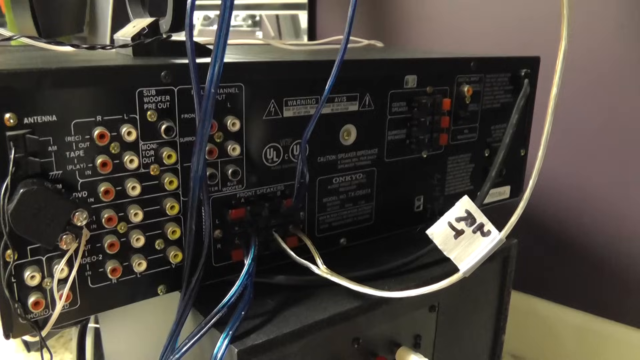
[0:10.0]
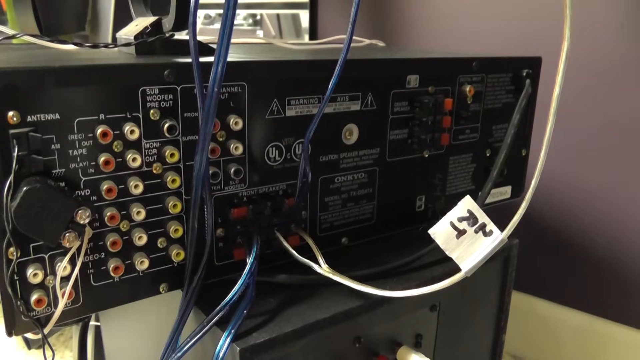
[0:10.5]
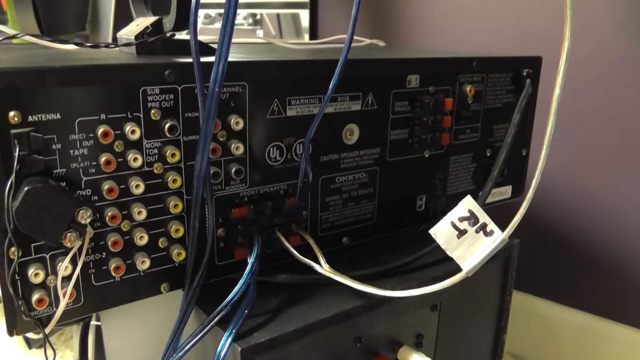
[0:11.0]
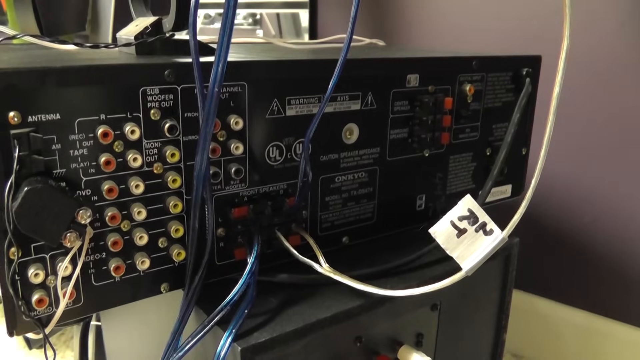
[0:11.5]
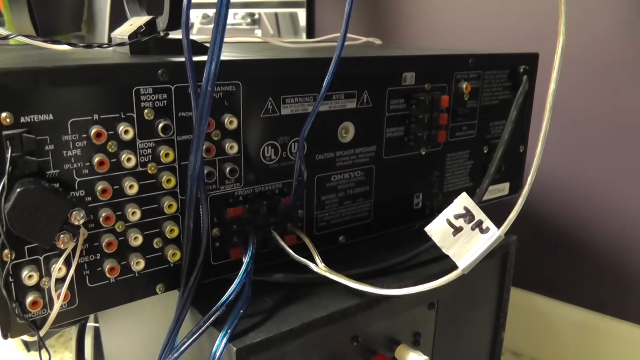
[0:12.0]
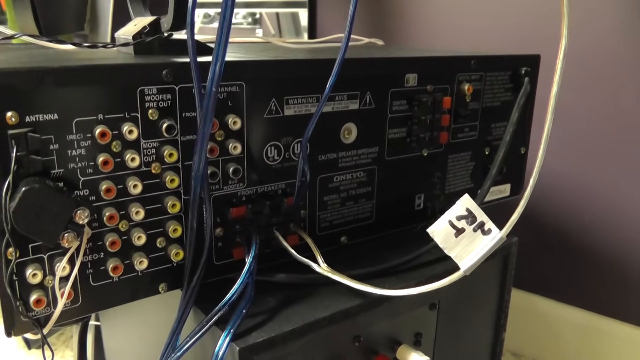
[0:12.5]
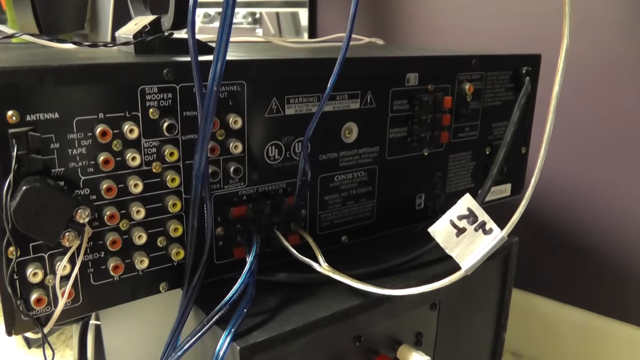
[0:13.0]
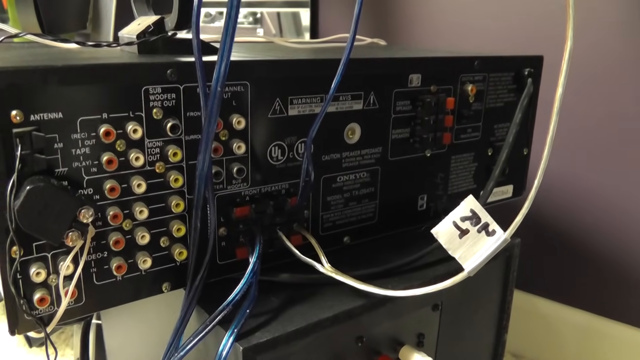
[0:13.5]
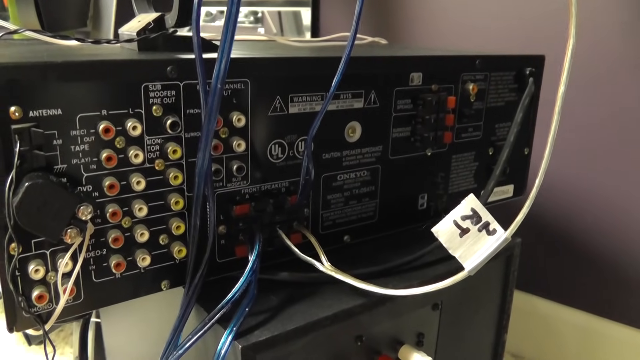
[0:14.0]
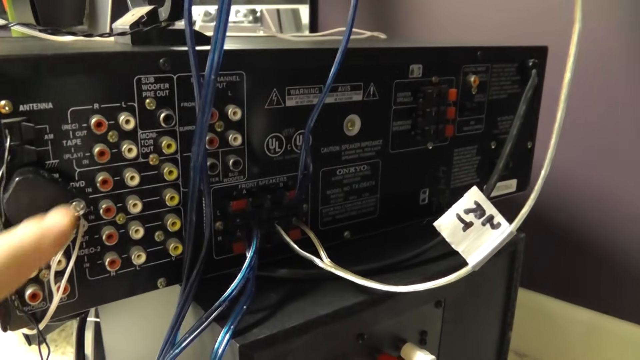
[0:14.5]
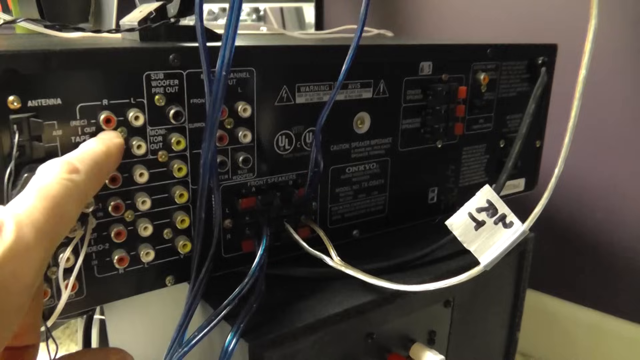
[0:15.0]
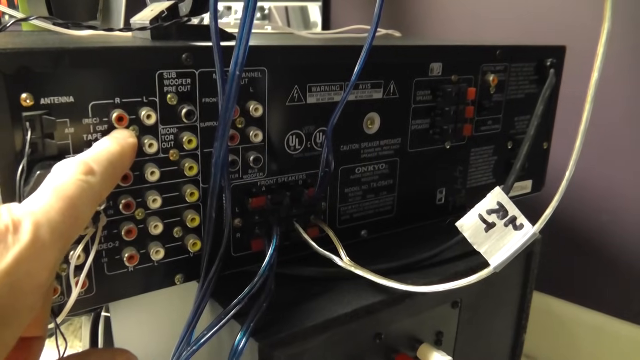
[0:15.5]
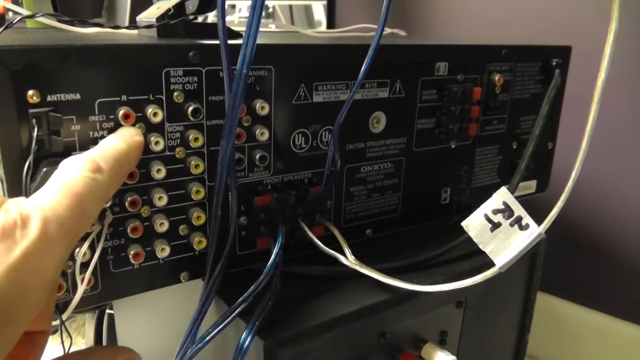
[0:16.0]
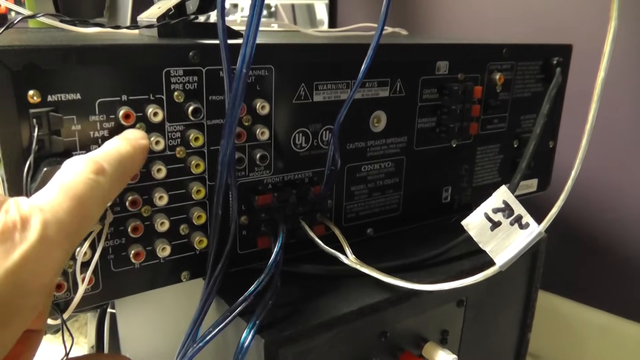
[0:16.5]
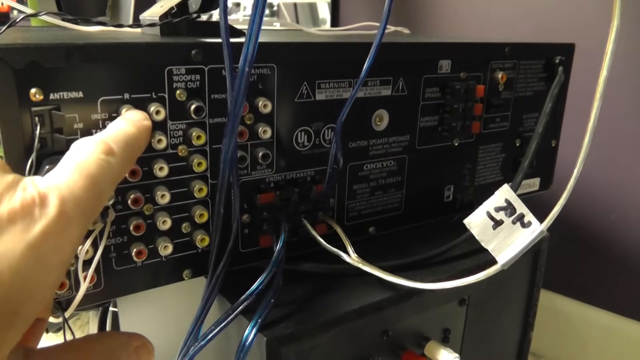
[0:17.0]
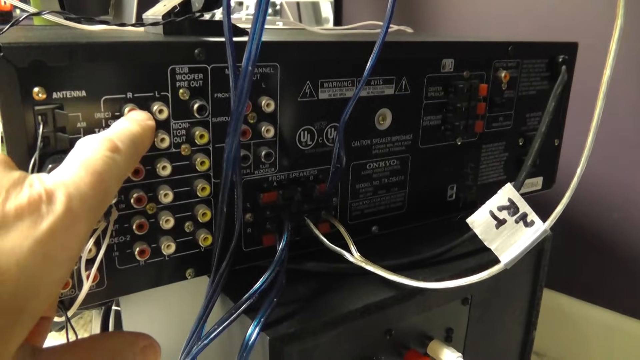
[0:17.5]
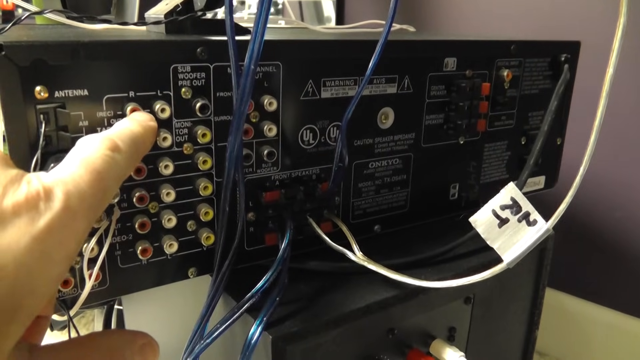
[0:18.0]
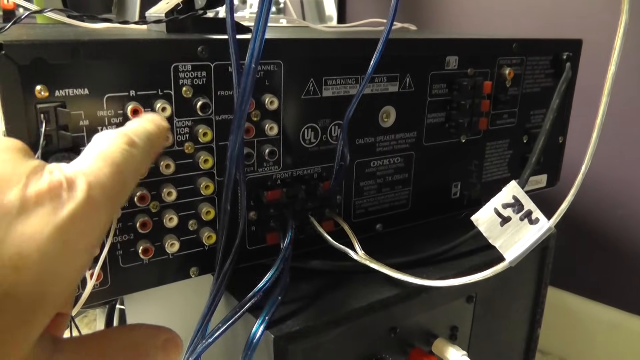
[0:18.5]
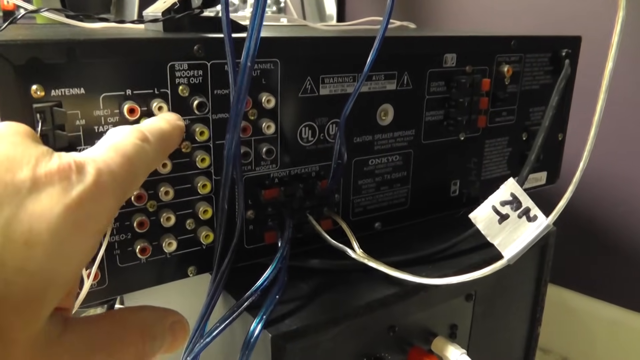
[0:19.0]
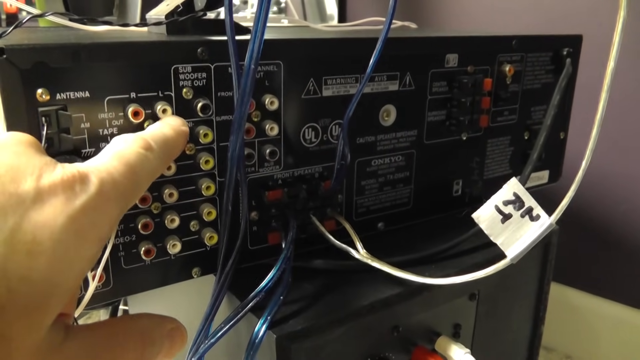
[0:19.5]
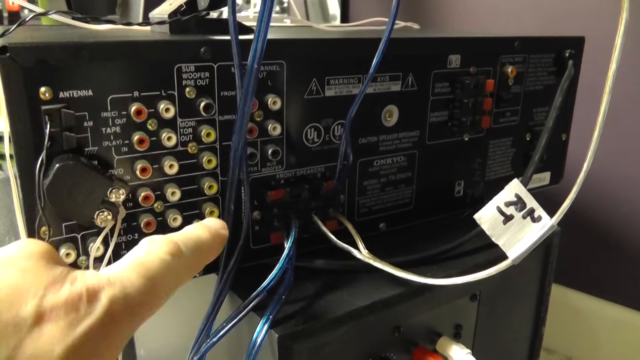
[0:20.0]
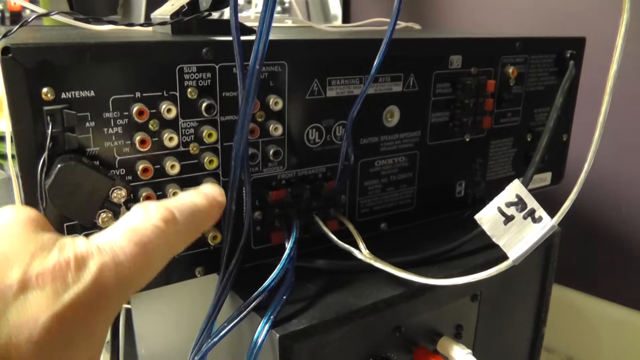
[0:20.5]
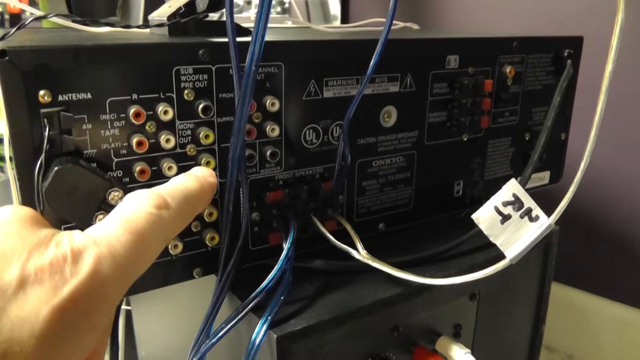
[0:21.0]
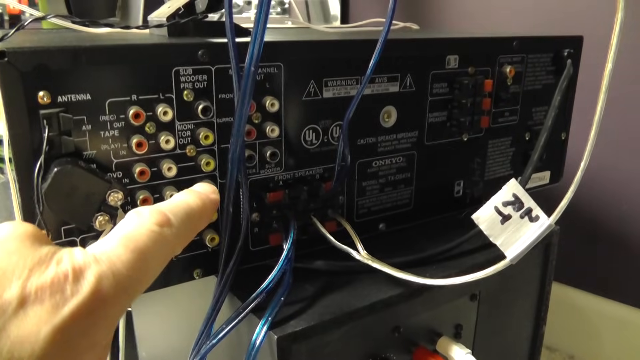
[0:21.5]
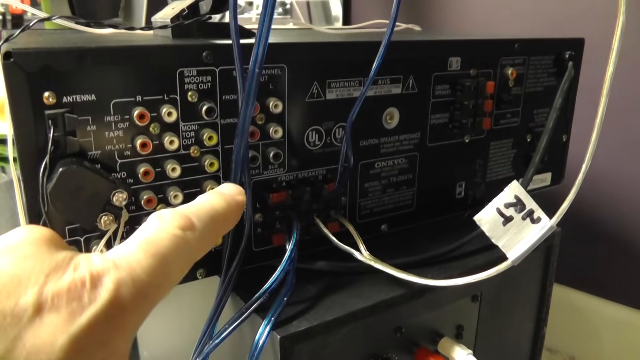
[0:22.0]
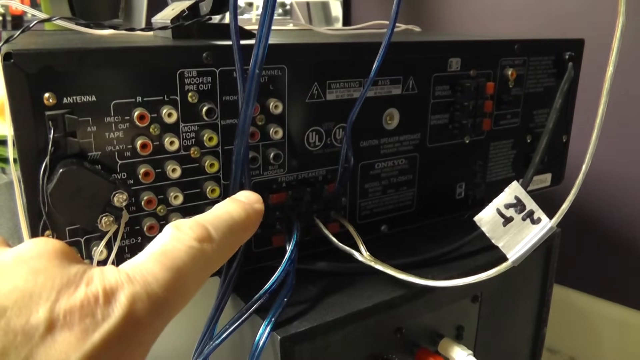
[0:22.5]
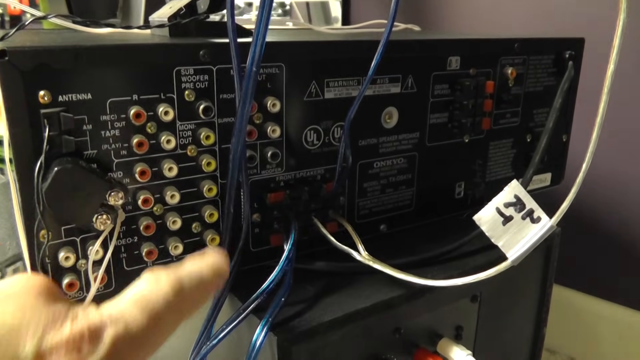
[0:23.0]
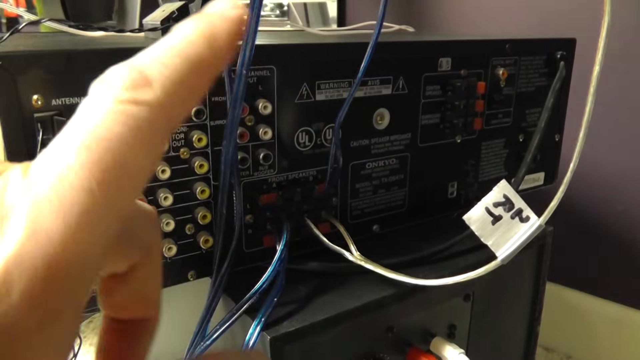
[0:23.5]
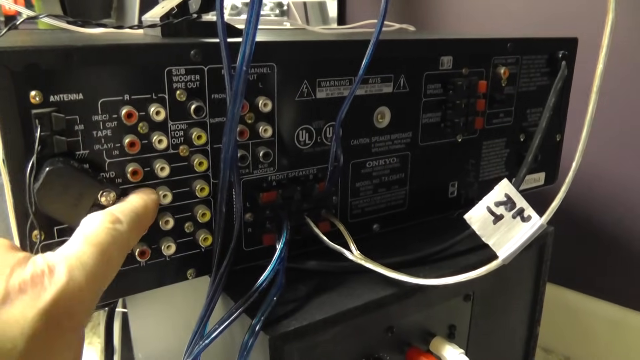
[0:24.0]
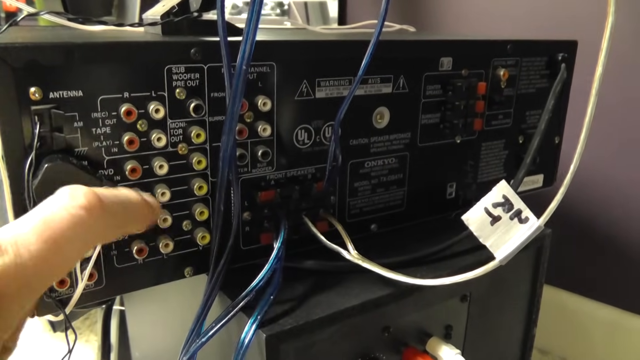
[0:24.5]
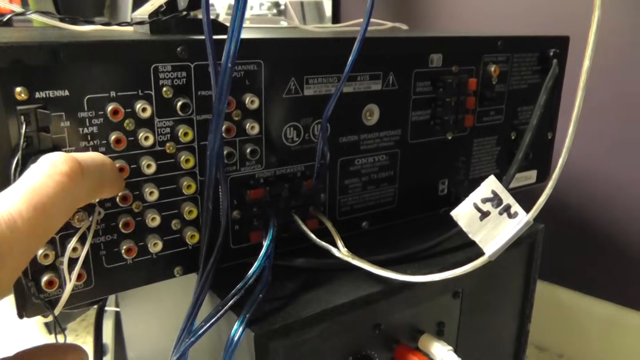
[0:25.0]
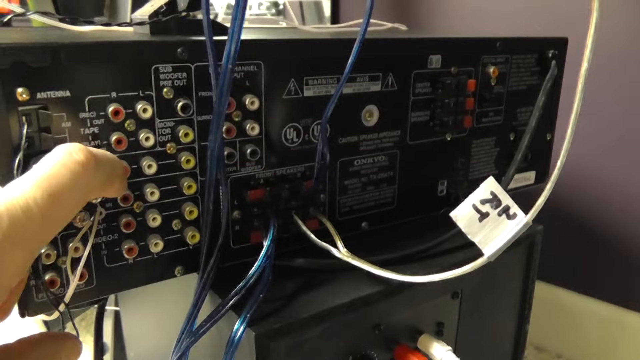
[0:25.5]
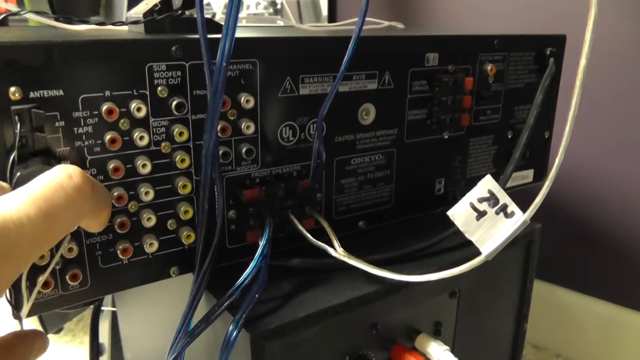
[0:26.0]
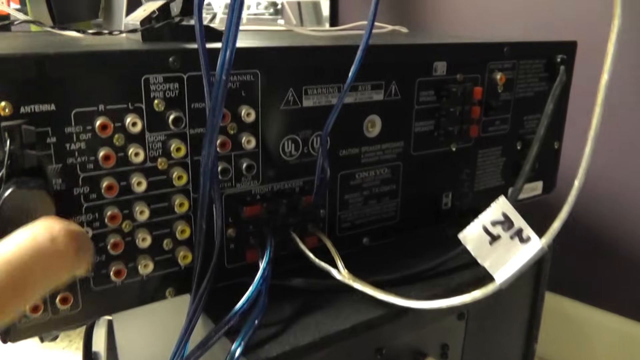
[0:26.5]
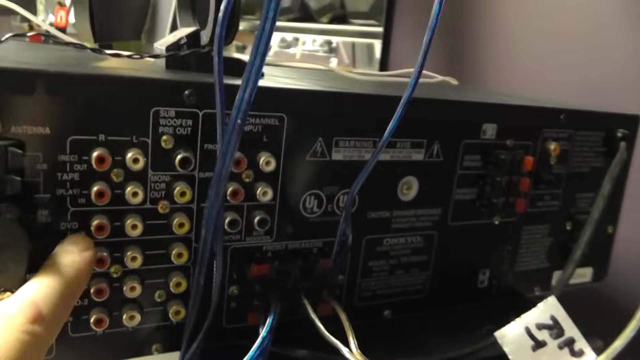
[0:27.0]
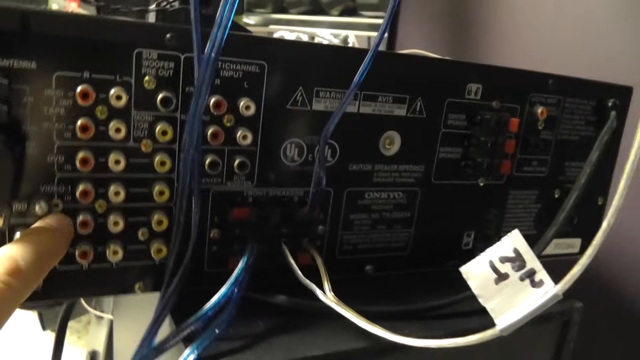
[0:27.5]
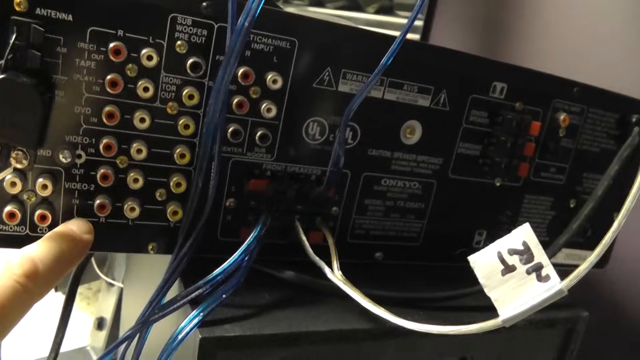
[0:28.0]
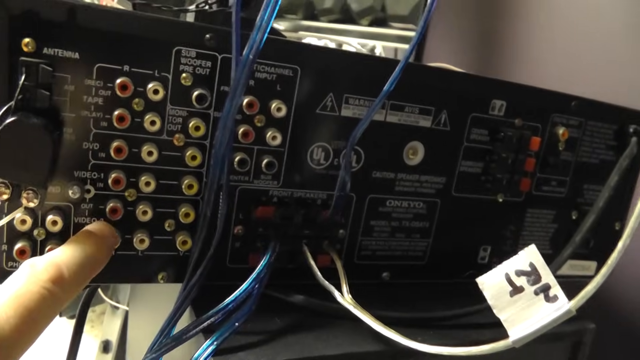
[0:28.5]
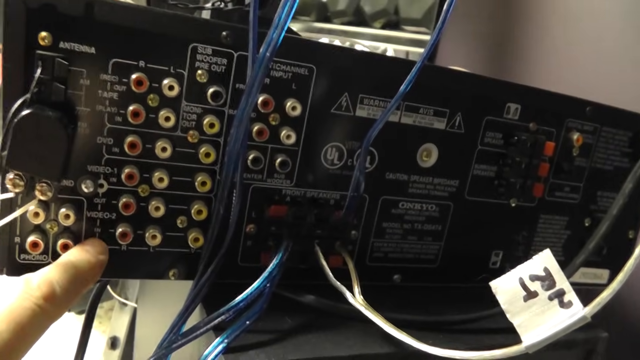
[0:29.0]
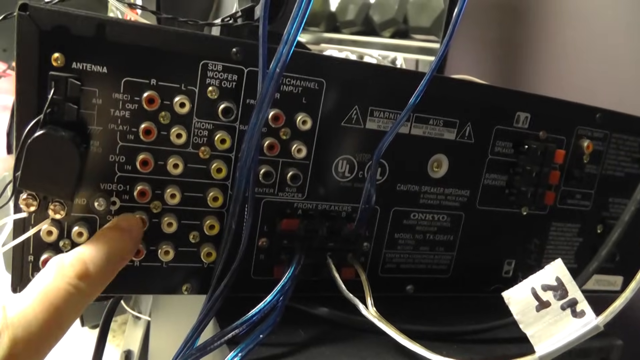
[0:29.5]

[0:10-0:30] The console is kind of jiggly, as if someone is moving it. A hand comes in from the lower left corner, and the index finger points to each of the plug-ins, apparently focusing mainly on a red plug-in. Moving over, he moves another cable plugged into the top left, and underneath it more colors appear: seemingly white plug-ins at the top and bottom under that main plug-in, and two red plug-ins below that. The console is wiggly and very unsteady. Objects lie on top of the console, apparently including a loose cable lying on it from the top middle on the right side. Lower down, more cables lie in some type of box. Blue cables come down from the middle of the top of the picture and are plugged into the middle of that box, which looks to have red buttons around it. There is also a cable or wire that looks almost like the plug-in type.